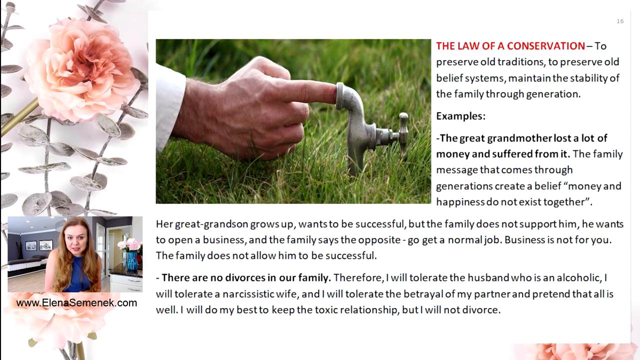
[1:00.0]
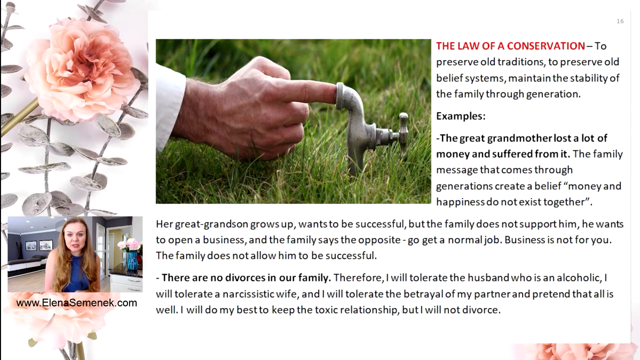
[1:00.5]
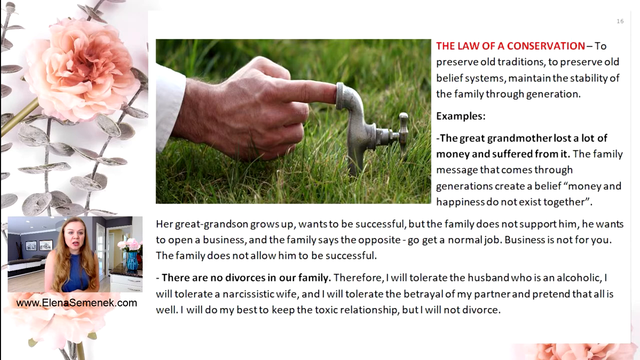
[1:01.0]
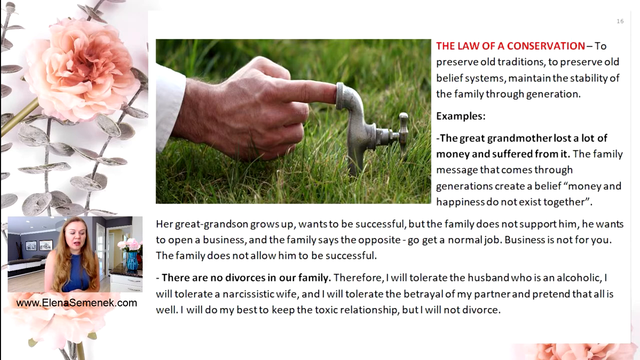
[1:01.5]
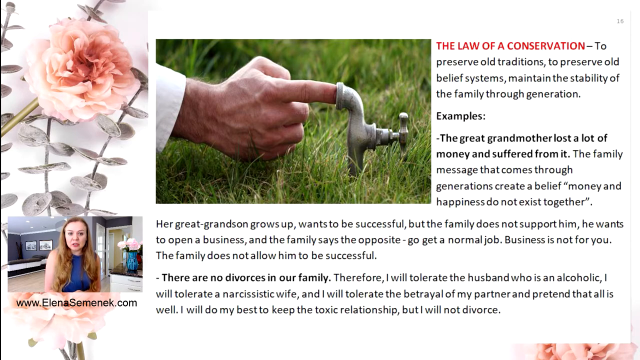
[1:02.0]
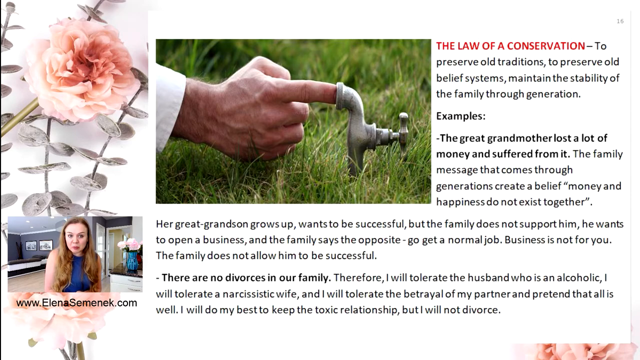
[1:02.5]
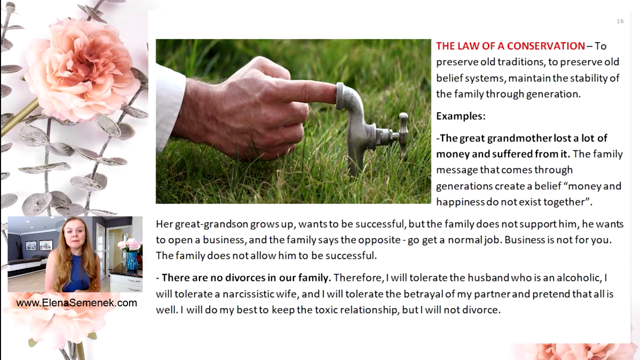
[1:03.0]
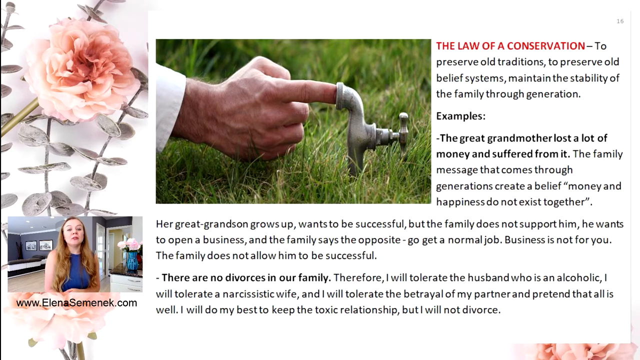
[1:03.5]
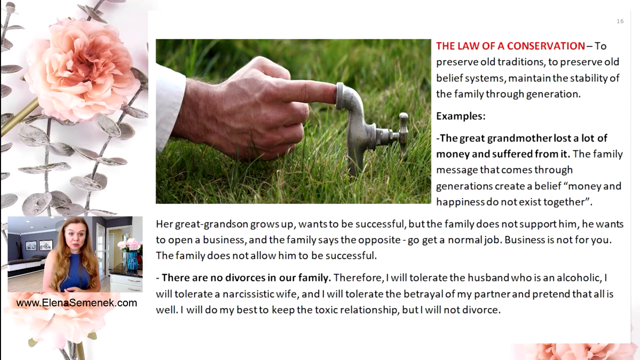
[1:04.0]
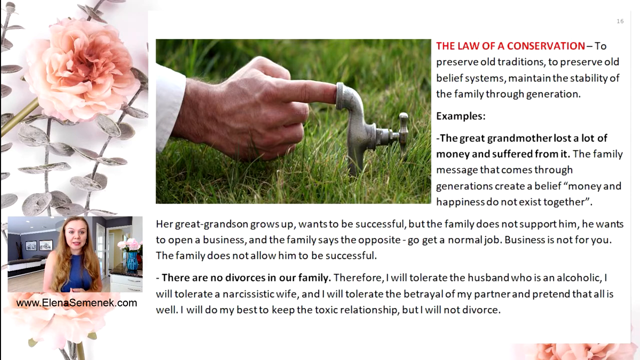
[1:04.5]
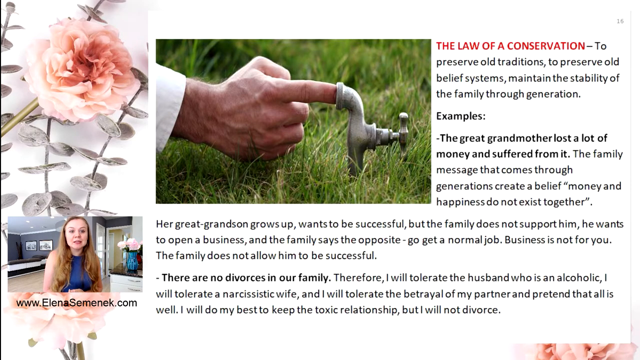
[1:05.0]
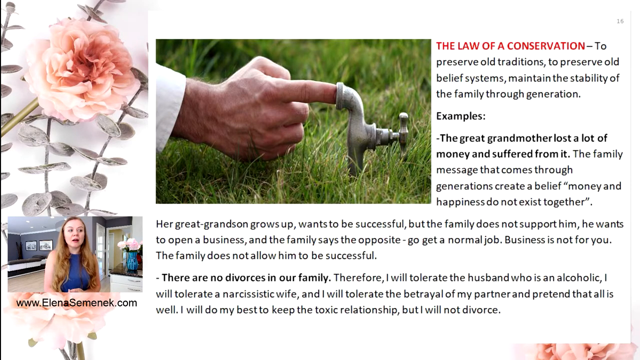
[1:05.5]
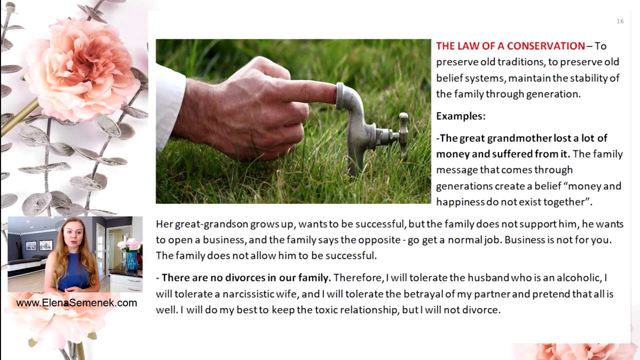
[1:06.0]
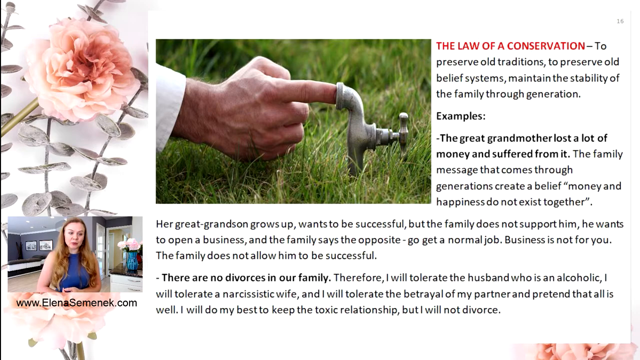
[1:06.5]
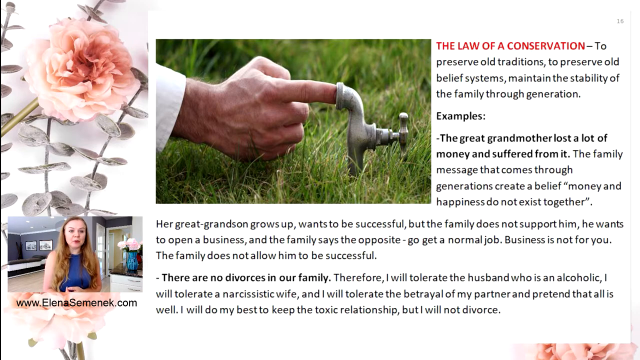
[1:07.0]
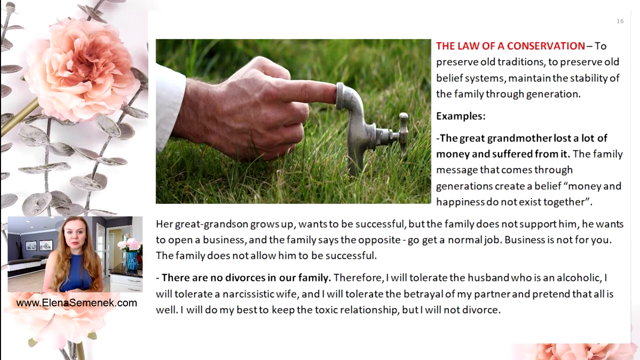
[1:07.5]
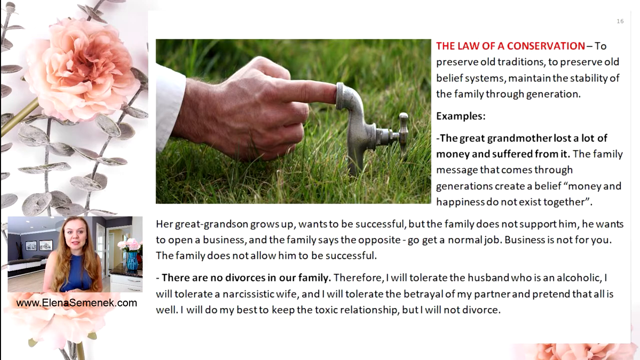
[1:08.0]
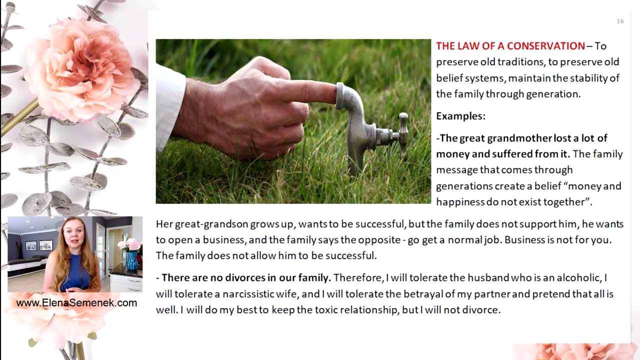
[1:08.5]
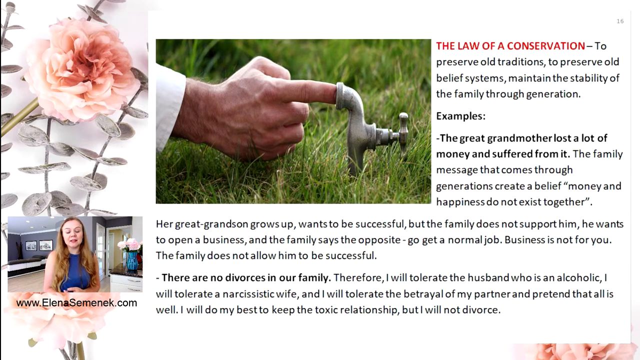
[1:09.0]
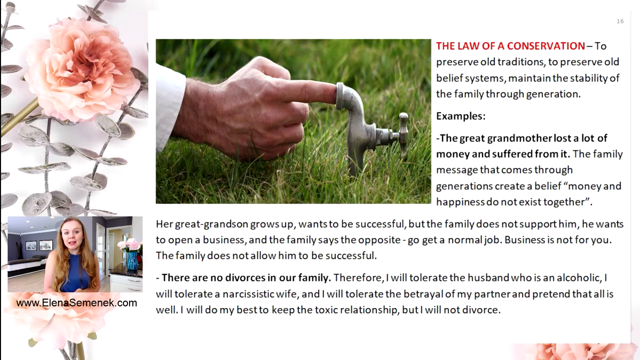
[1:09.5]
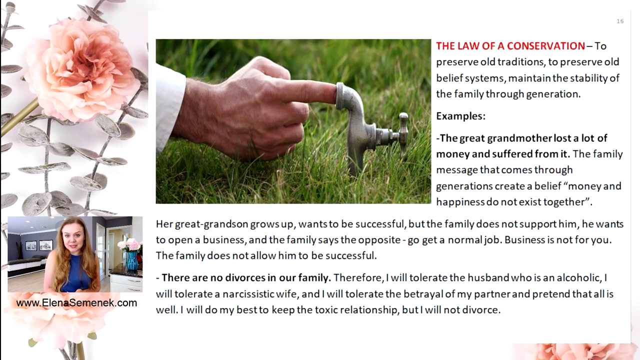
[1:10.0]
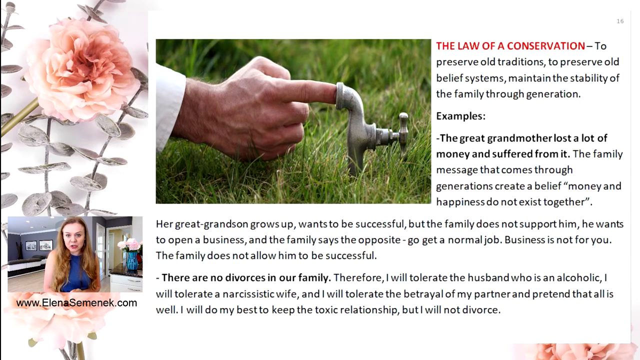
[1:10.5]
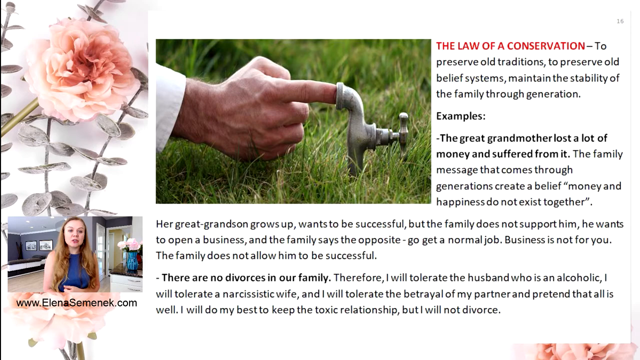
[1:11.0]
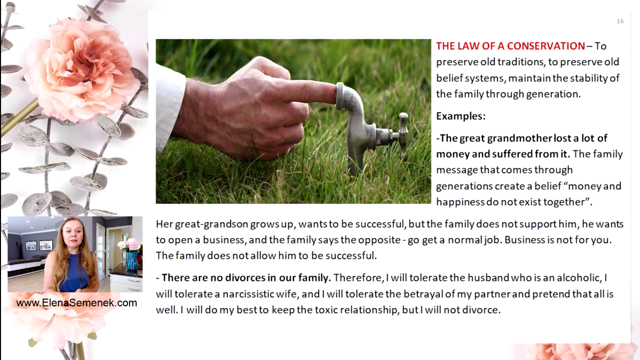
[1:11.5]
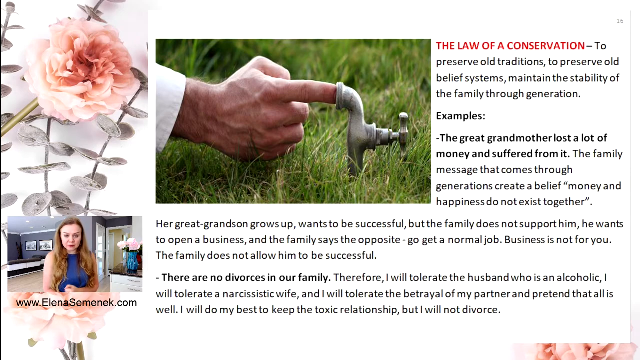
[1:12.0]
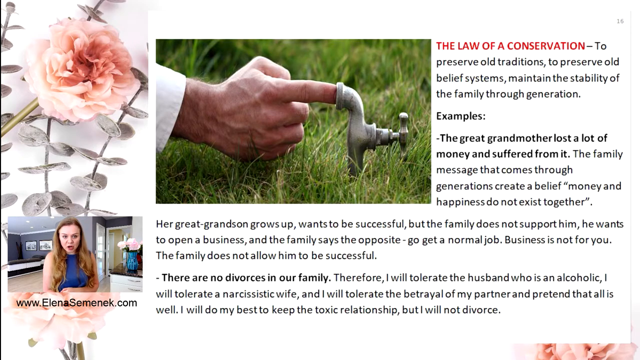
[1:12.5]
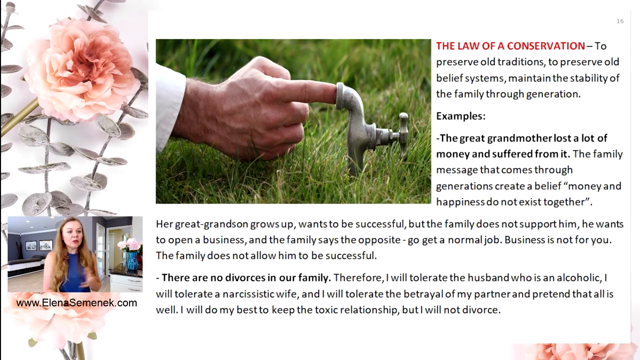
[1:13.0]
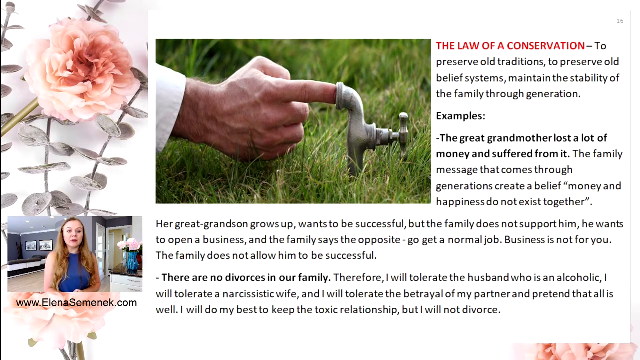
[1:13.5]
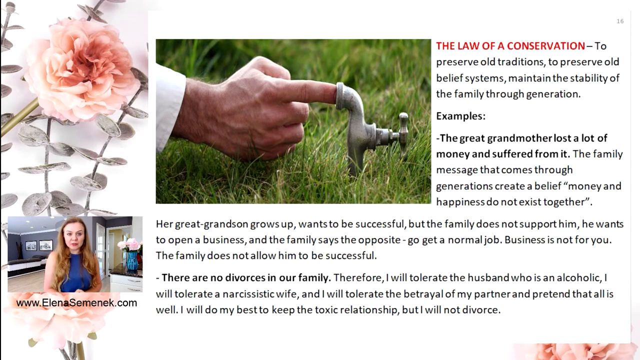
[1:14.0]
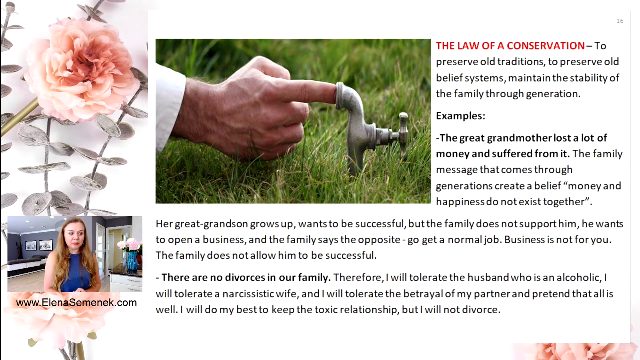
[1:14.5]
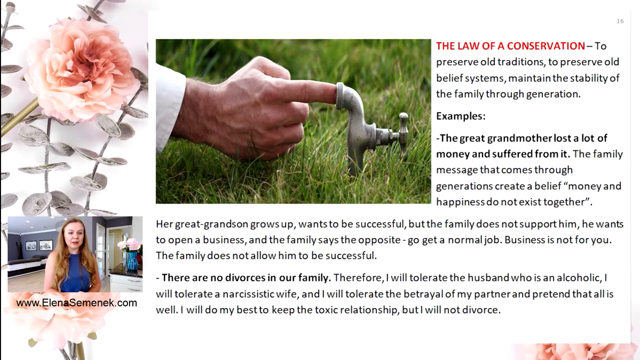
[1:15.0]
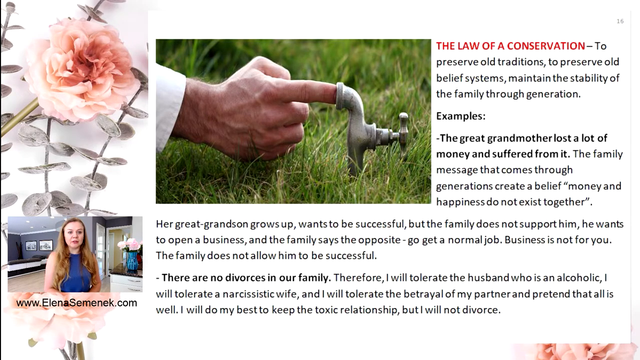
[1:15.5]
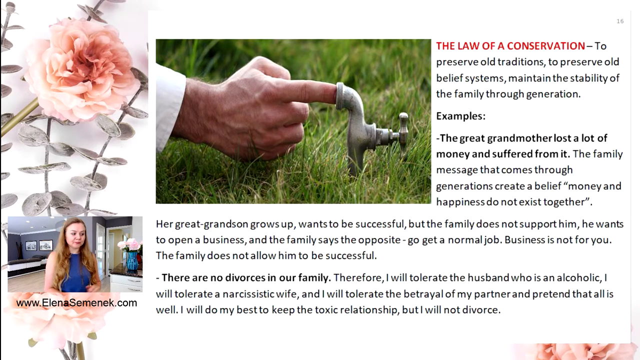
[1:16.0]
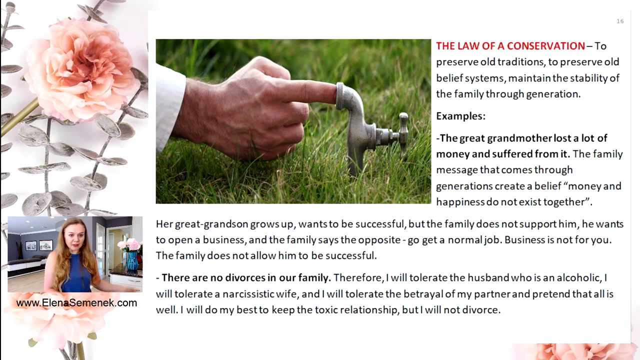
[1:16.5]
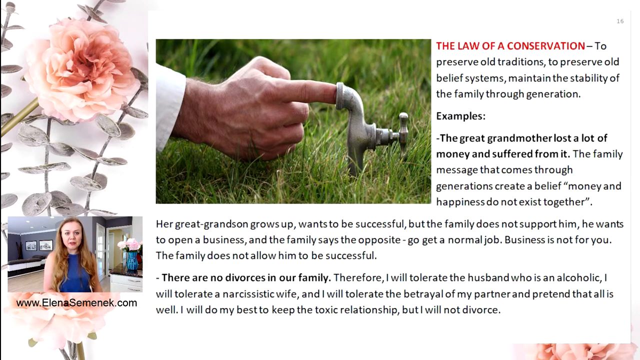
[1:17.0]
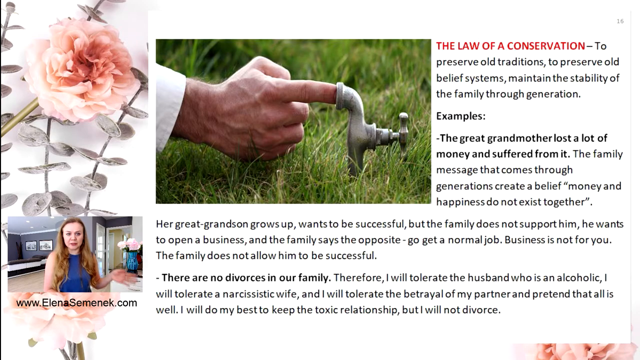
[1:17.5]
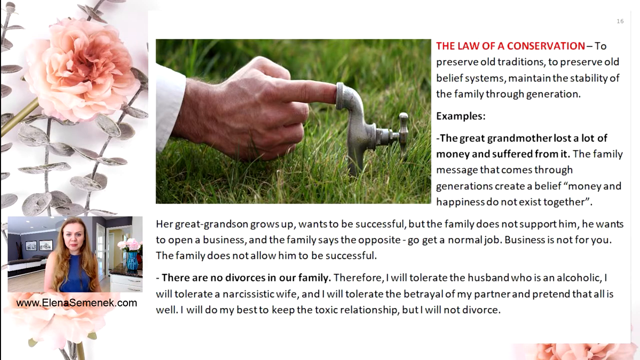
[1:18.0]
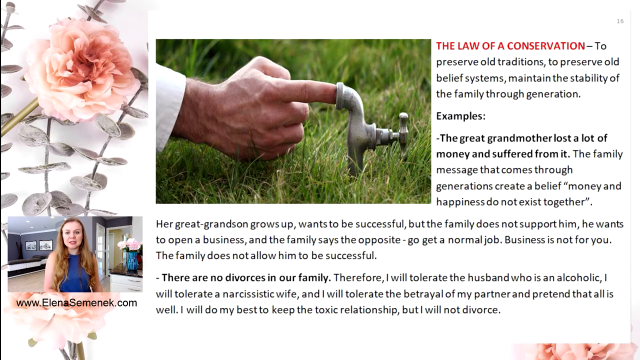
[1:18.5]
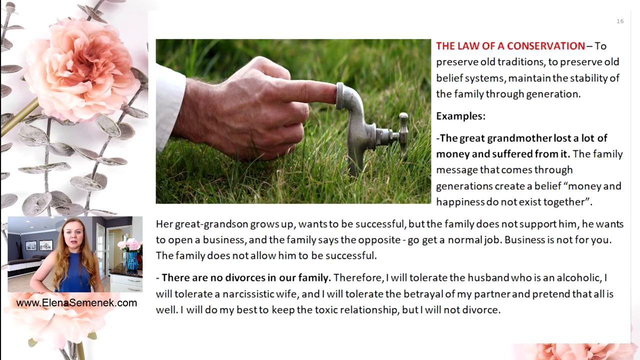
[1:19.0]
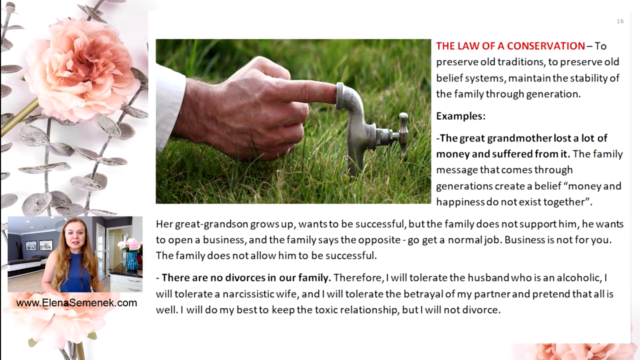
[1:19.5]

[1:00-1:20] The lady keeps talking while the slide stays the same. The next paragraph on the slide mentions examples and reads "The great grandmother lost a lot of money and suffered from it. The family message that comes through generations creates a belief. Money and happiness do not exist together."